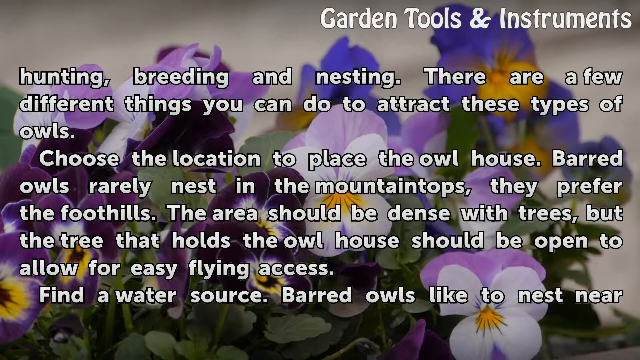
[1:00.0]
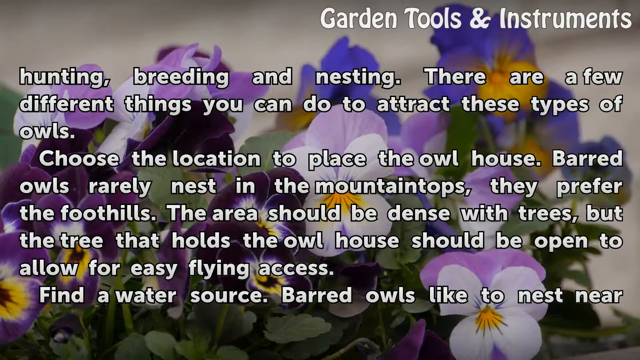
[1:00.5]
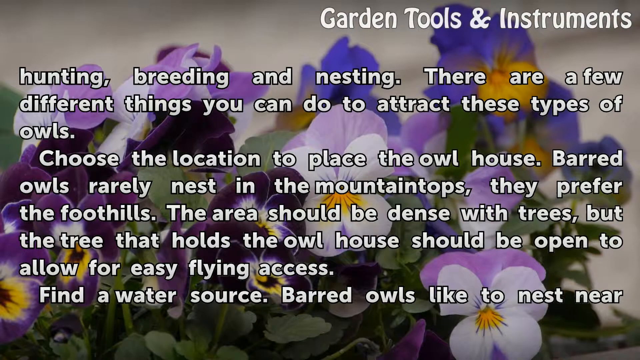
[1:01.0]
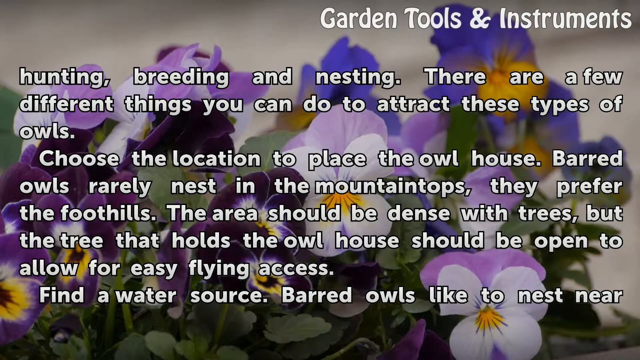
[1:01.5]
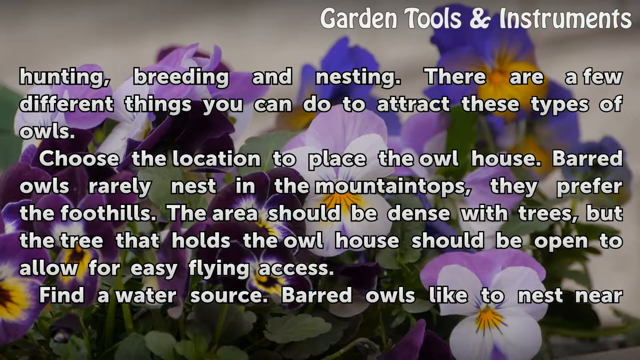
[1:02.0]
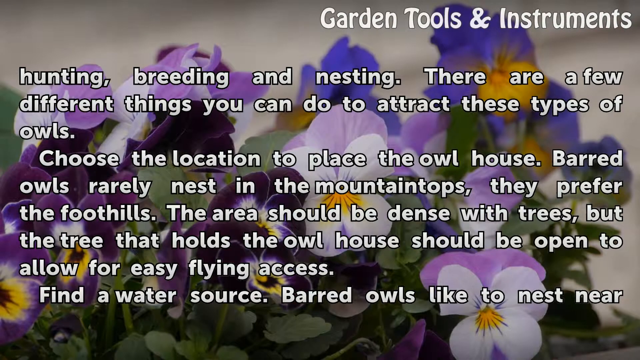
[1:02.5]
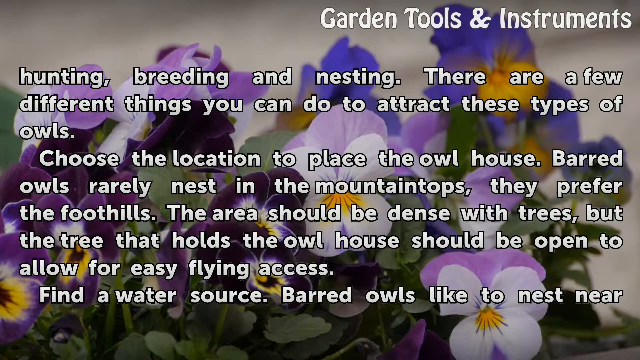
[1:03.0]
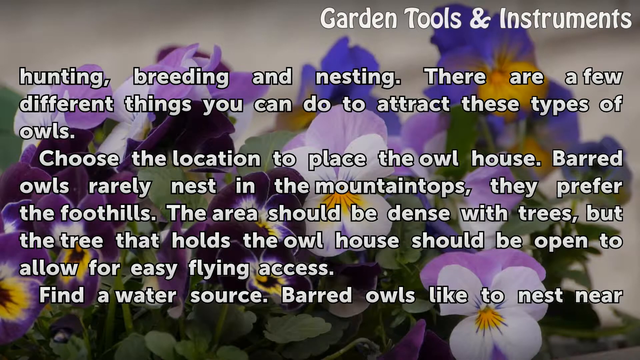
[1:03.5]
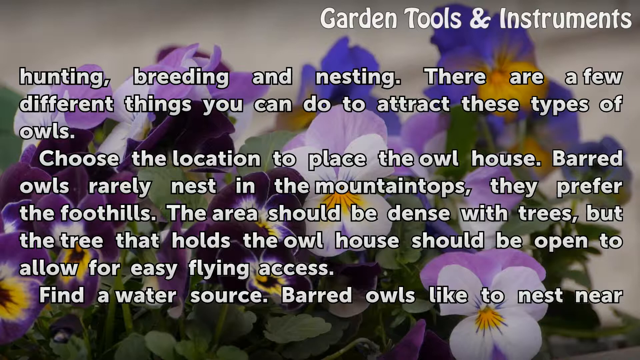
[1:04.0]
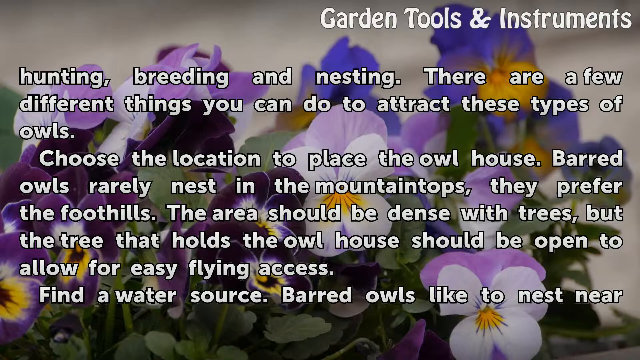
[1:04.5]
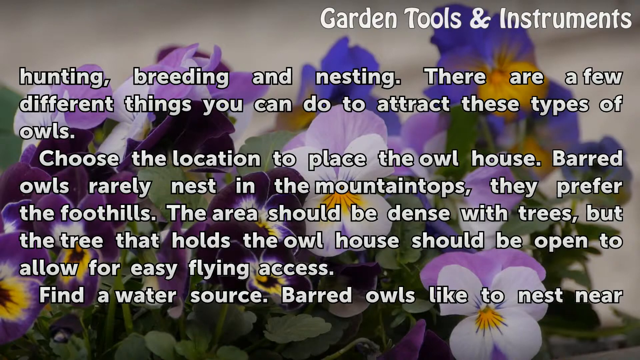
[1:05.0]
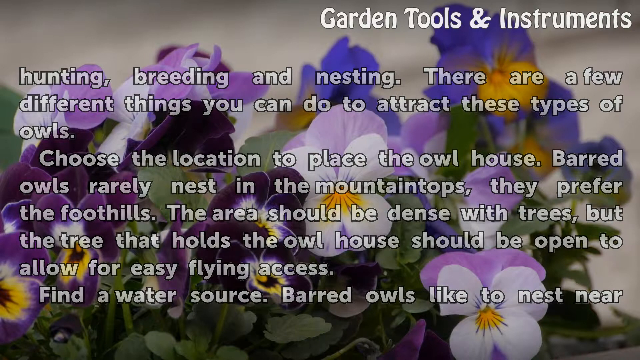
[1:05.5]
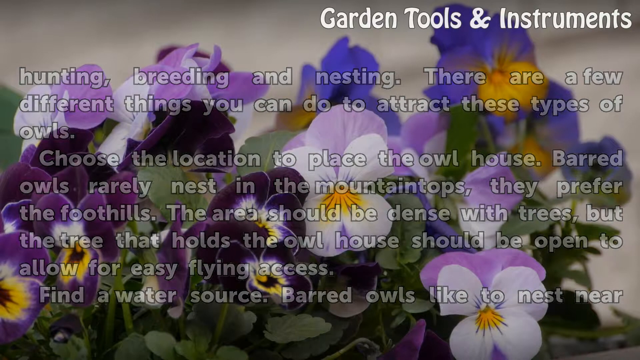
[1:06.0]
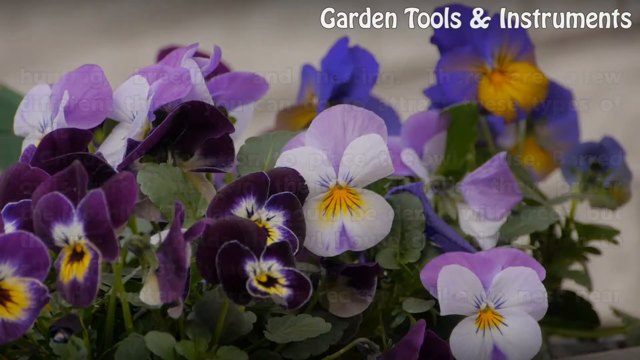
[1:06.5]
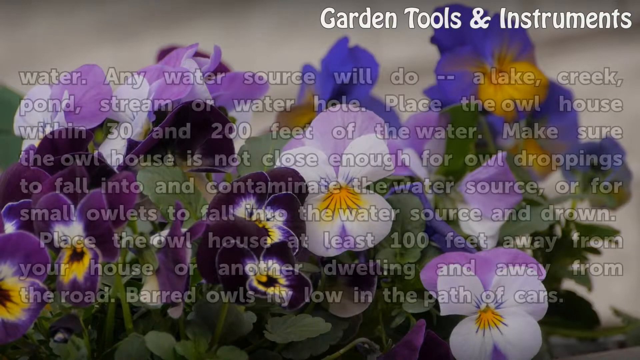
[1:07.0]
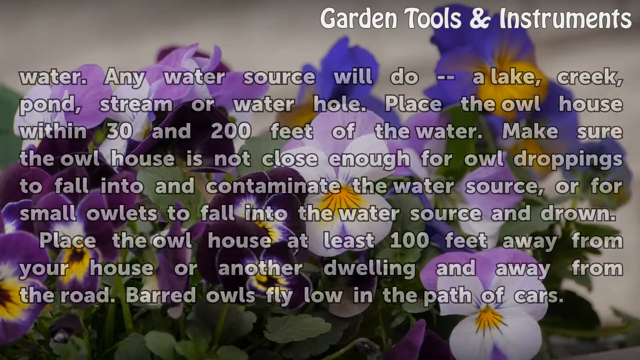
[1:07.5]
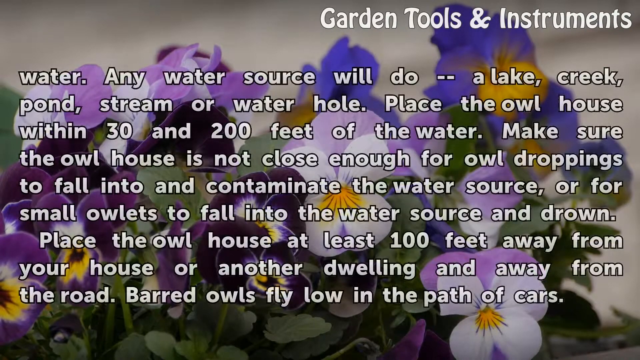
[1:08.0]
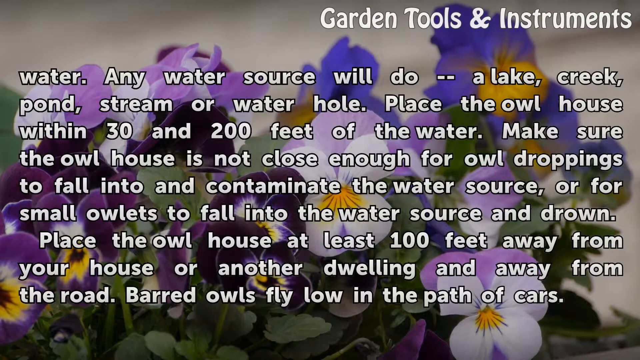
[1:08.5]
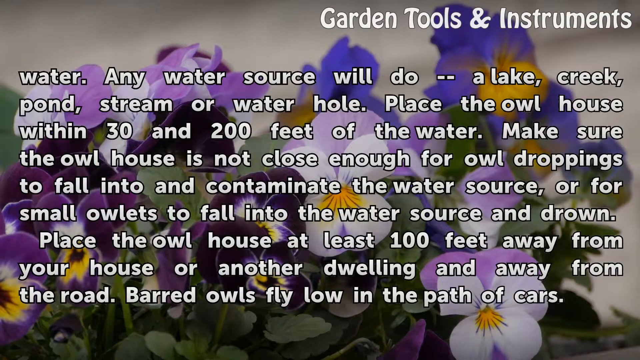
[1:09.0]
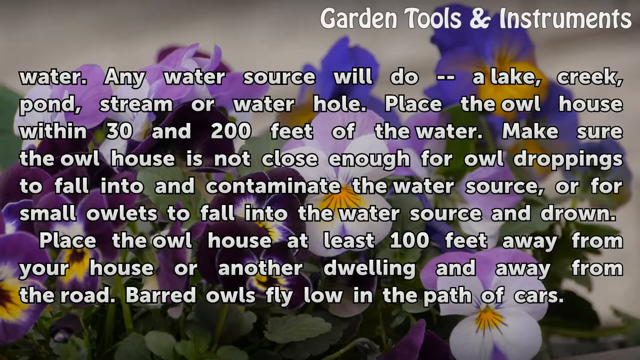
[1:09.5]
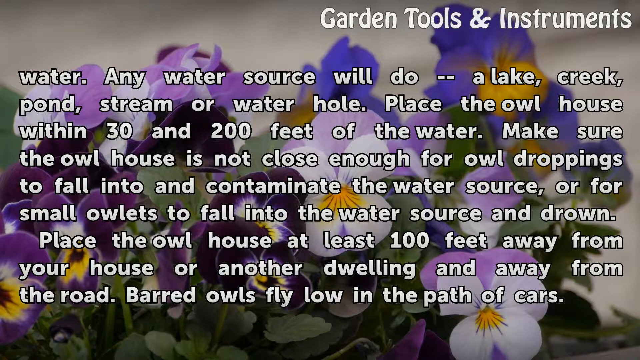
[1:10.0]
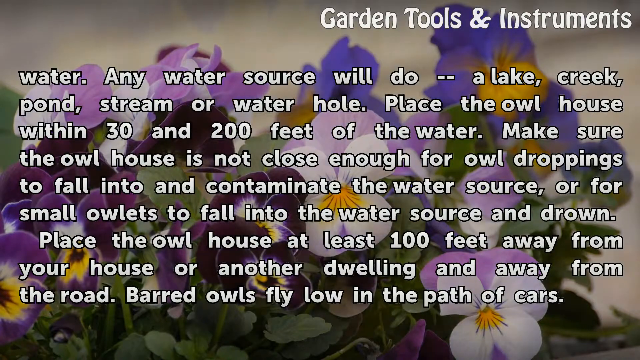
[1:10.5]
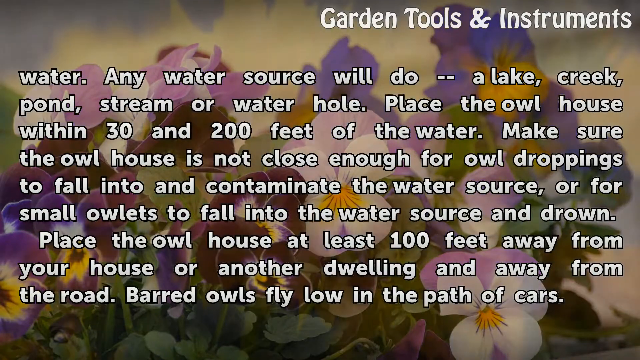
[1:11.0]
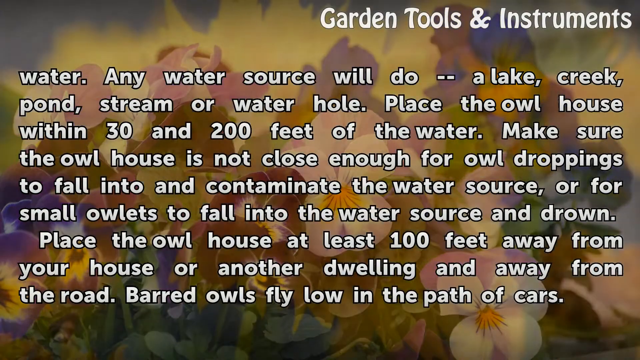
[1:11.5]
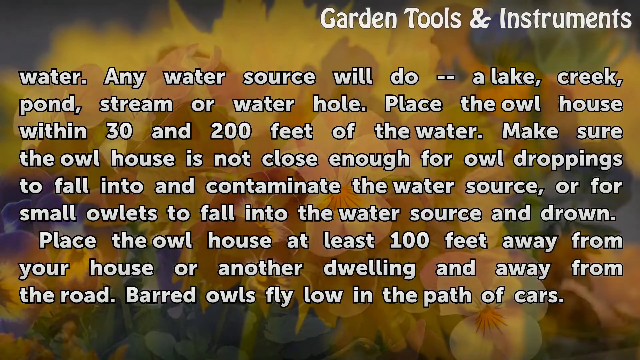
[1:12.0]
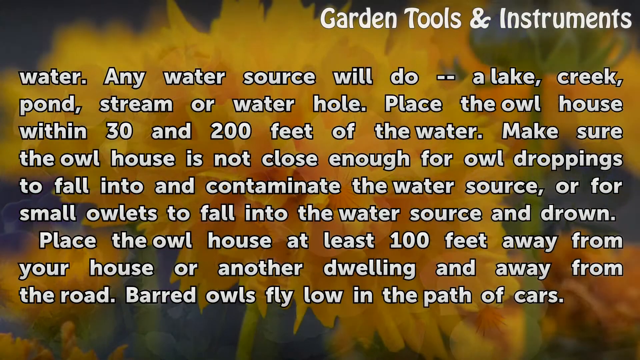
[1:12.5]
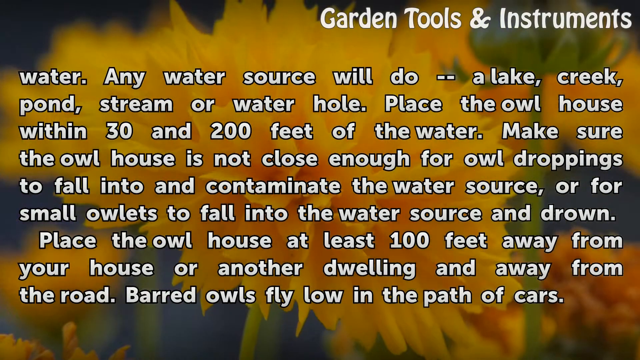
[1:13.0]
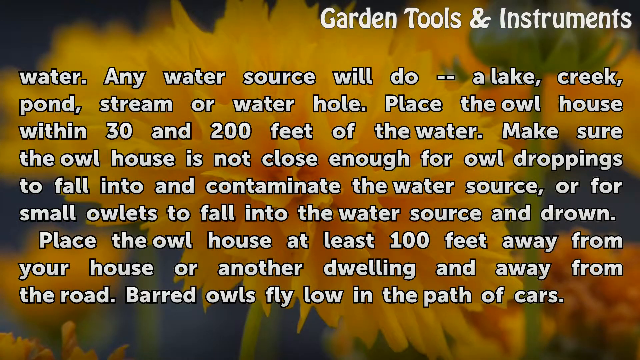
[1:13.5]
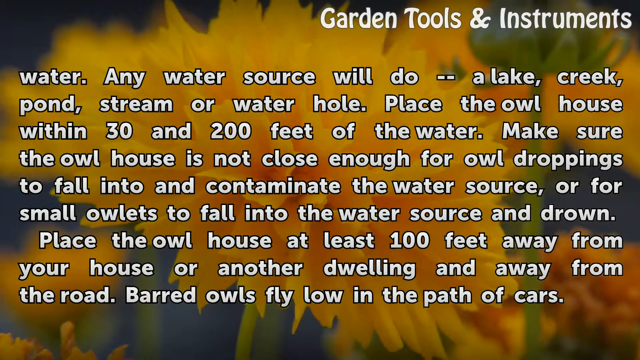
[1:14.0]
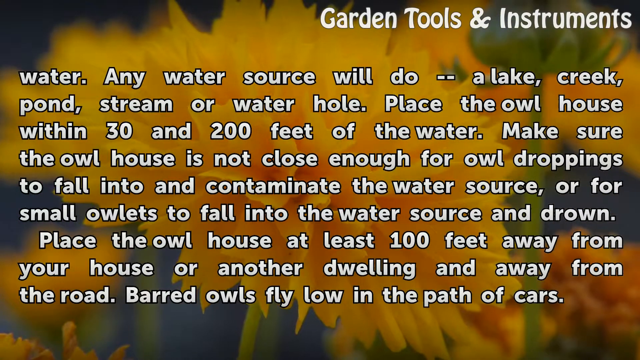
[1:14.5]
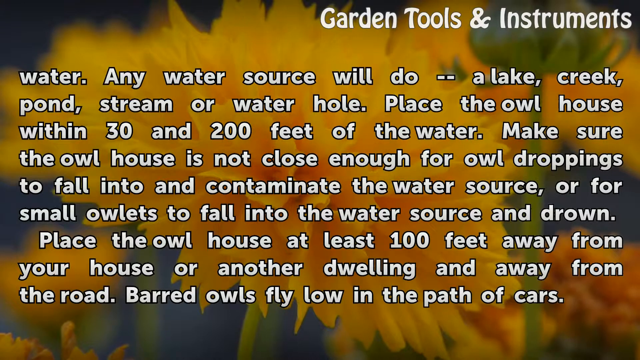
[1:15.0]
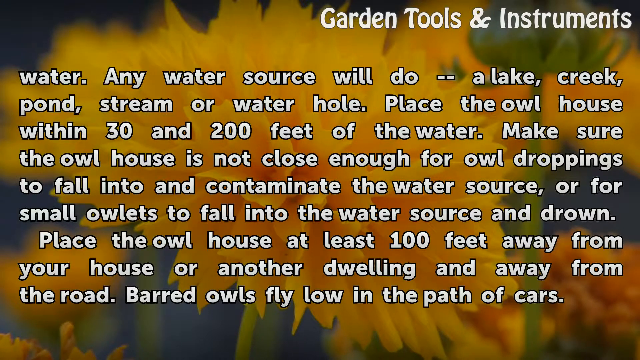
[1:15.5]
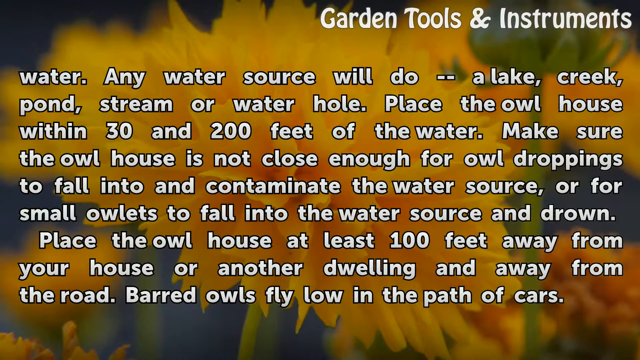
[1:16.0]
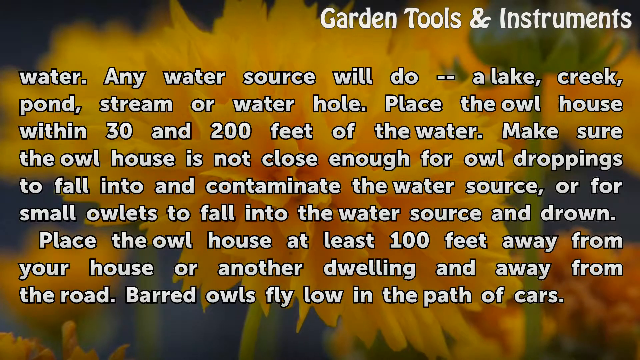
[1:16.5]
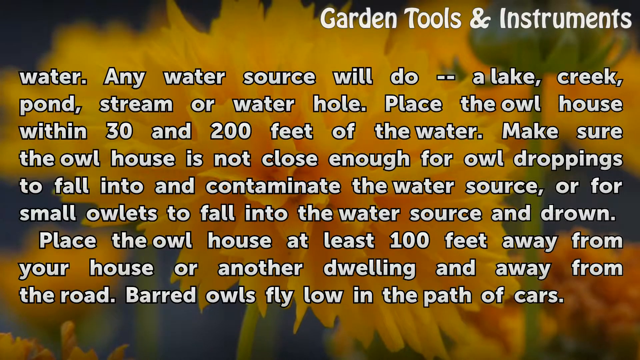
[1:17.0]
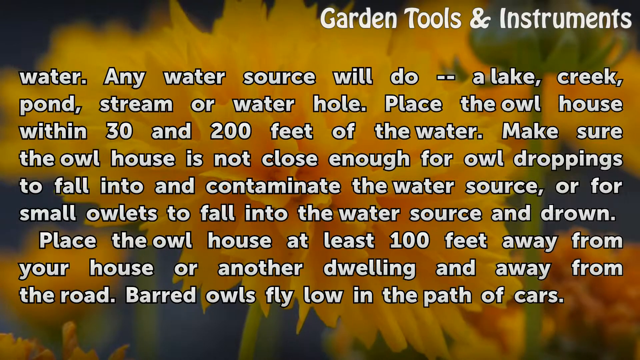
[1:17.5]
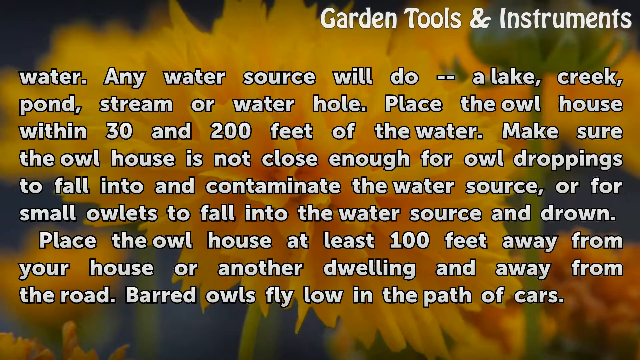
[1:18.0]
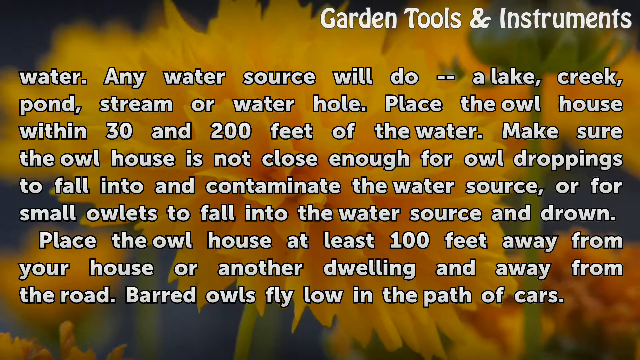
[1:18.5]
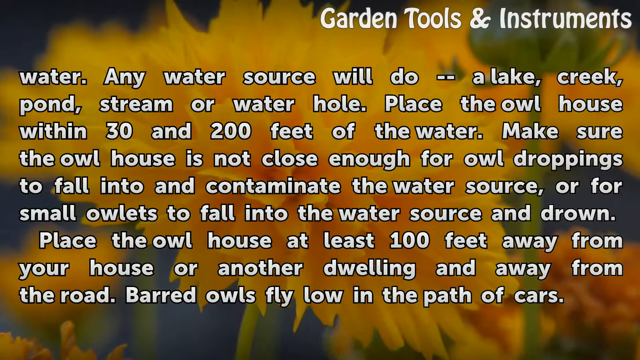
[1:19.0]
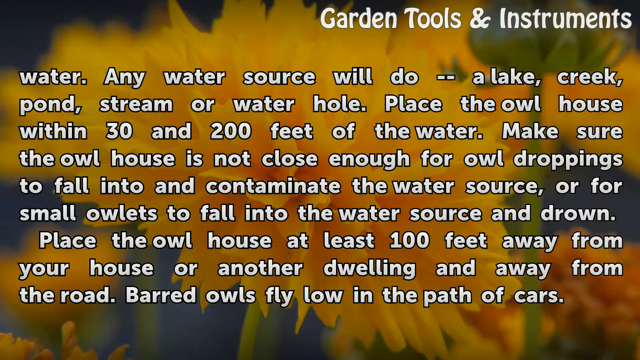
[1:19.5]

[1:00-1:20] The background image appears to show small flowers with petals in various shades of purple: a bright purple flower with a yellow center, lavender shades and light purple shades closer to white, and some darker royal purple flowers that also have yellow centers, with small green leaves underneath. White text covering the screen continues from the previous slide: "hunting, breeding, and nesting. There are a few different things you can do to attract these types of owls. Choose the location to place the owl house. Barred owls rarely nest in the mountaintops, they prefer the foothills. The area should be dense with trees, but the tree that holds the owl house should be open to allow for easy flying access. Find the water source. Barred owls like to nest near water. Any water source will do -- a lake, creek, pond, stream, or a waterhole. Place the owl house within 30 and 200 feet of the water. Make sure the owl house is not close enough for owl droppings to fall into and contaminate the water source or for small owlets to fall into the water source and drown. Place a house at least 100 feet away from your house or another building and away from the road. Barred owls fly low in the path of cars." The background video then changes to a close-up of a large, round, yellow flower that looks somewhat like a yellow spiky ball, the ends of its petals having pointy tips and sticking out.